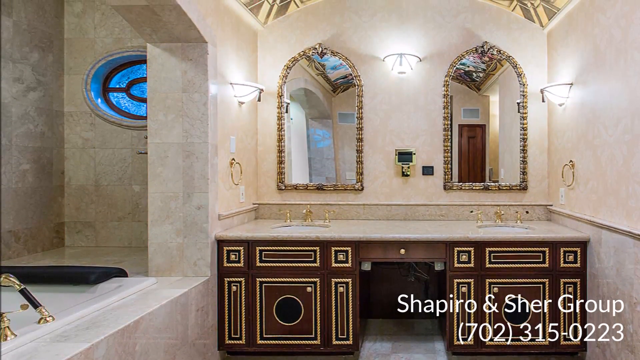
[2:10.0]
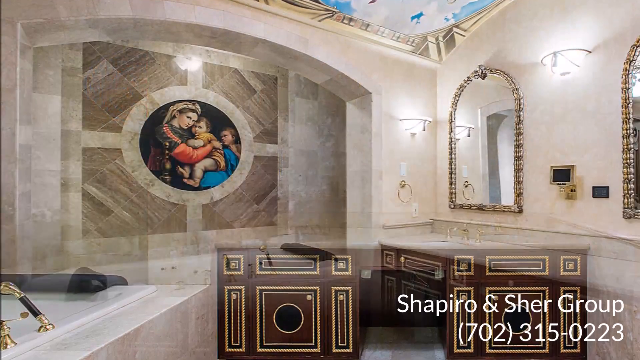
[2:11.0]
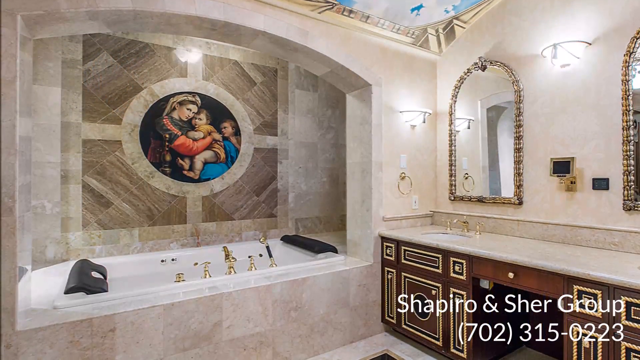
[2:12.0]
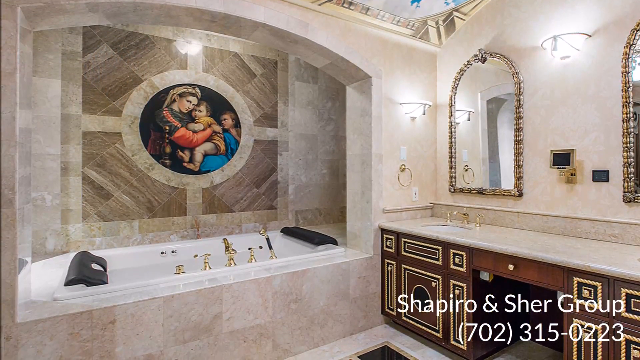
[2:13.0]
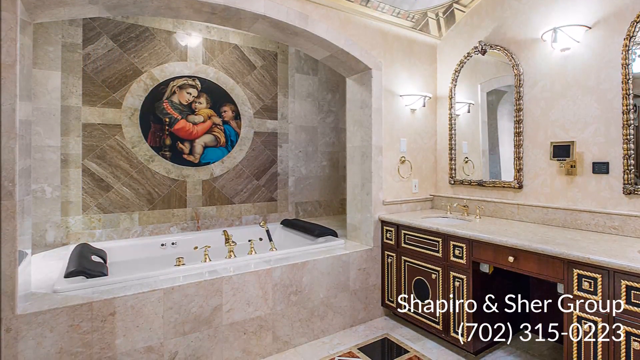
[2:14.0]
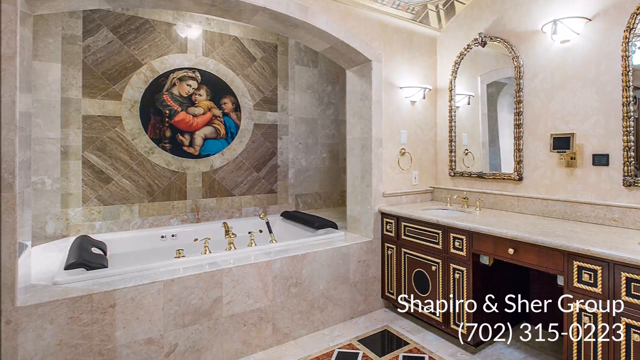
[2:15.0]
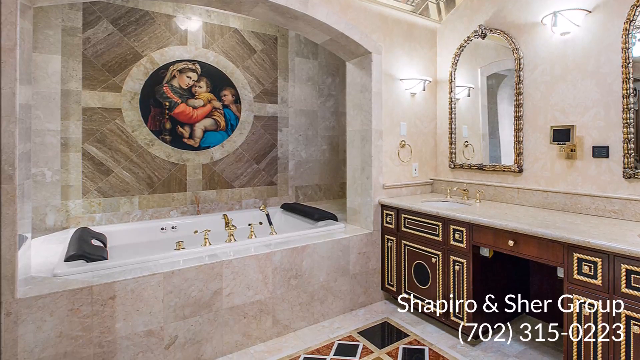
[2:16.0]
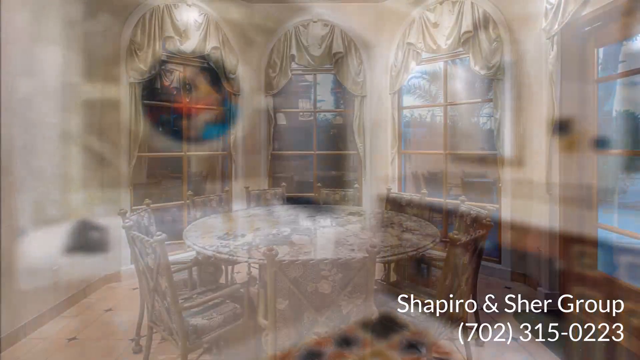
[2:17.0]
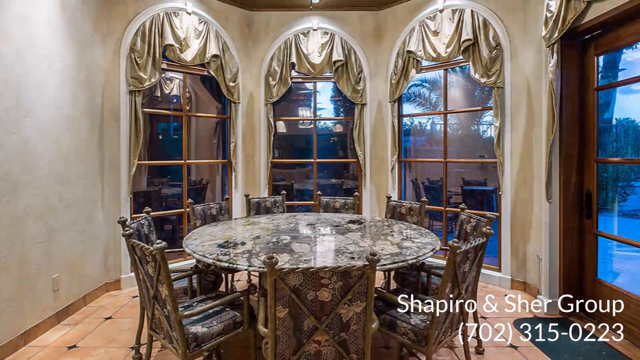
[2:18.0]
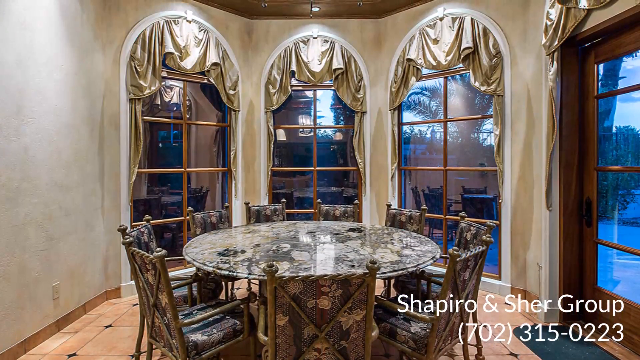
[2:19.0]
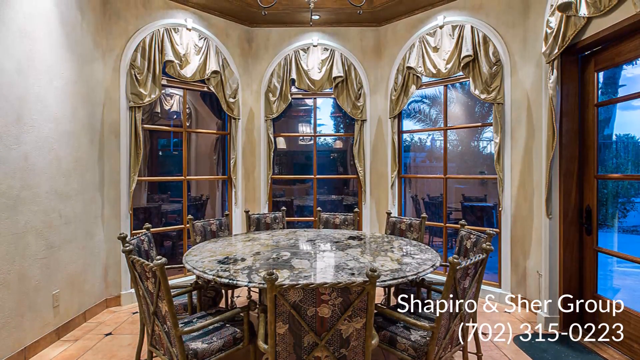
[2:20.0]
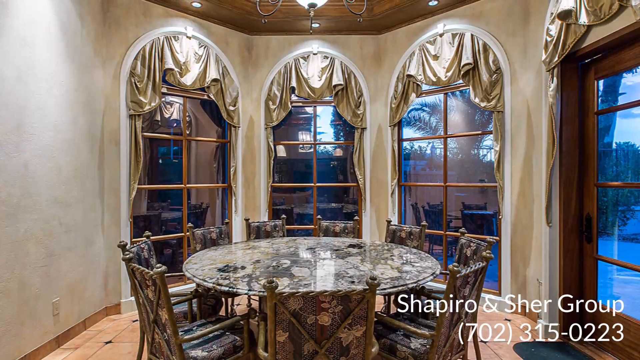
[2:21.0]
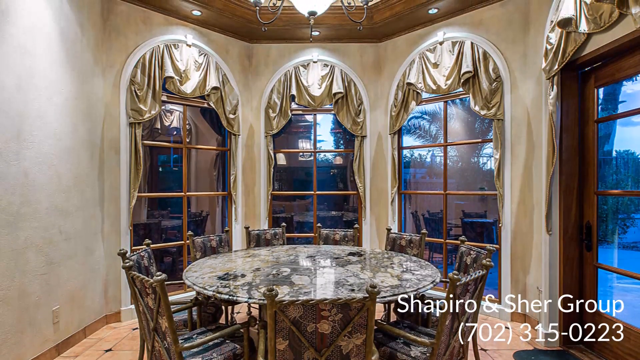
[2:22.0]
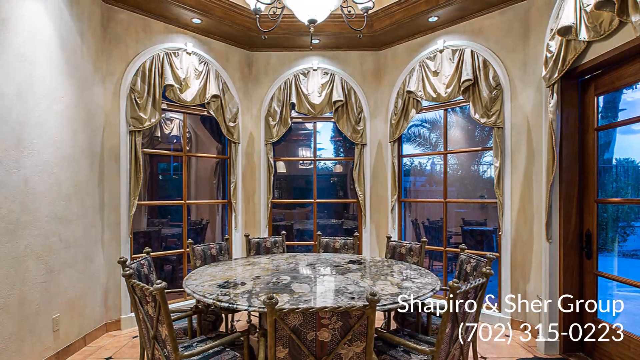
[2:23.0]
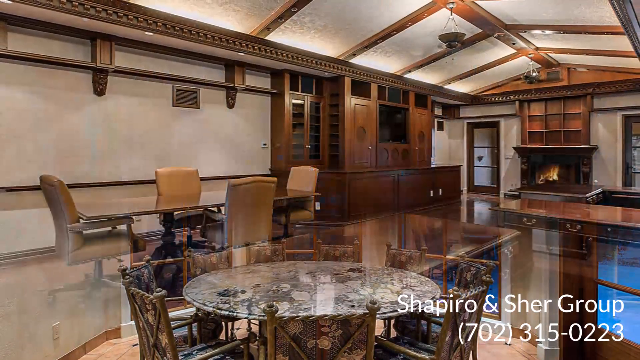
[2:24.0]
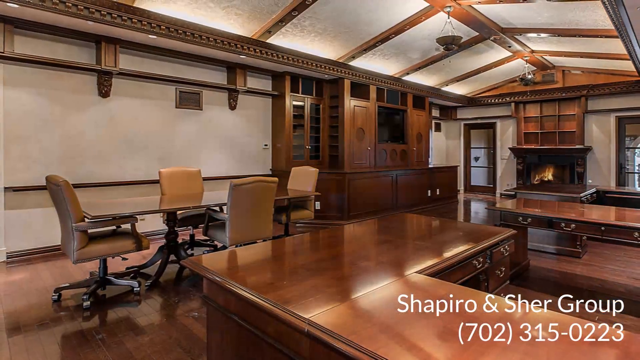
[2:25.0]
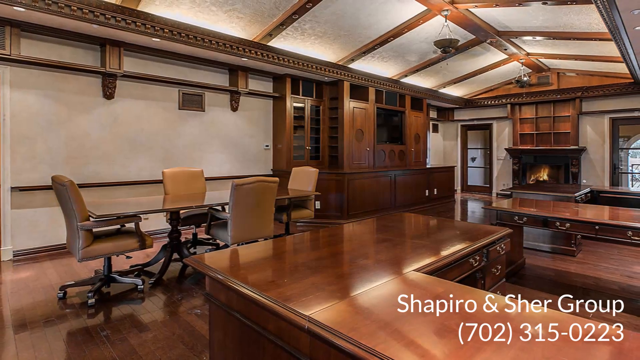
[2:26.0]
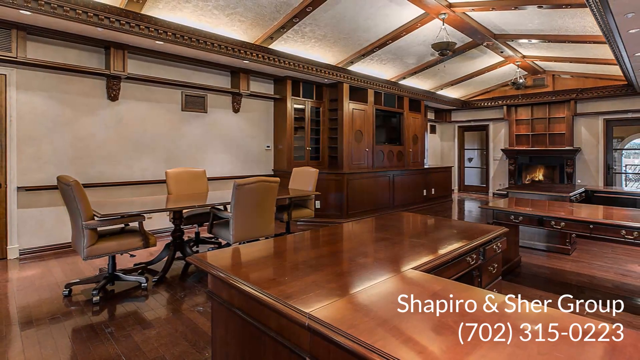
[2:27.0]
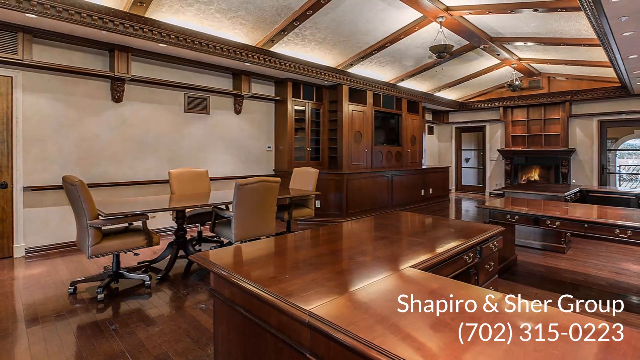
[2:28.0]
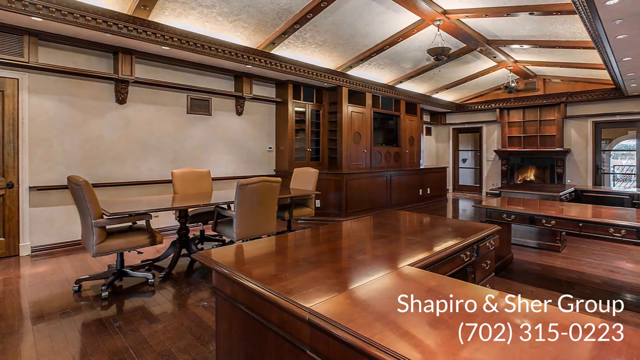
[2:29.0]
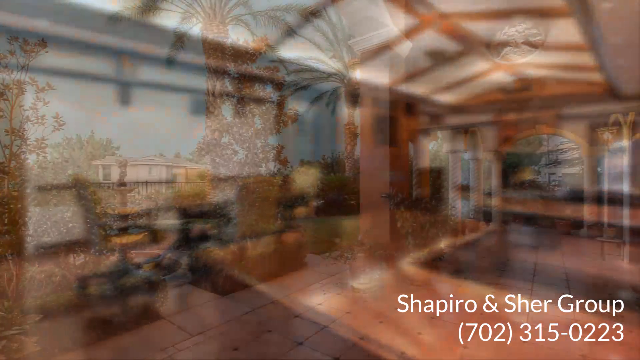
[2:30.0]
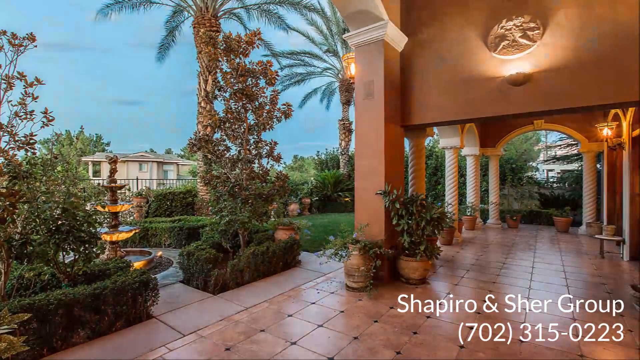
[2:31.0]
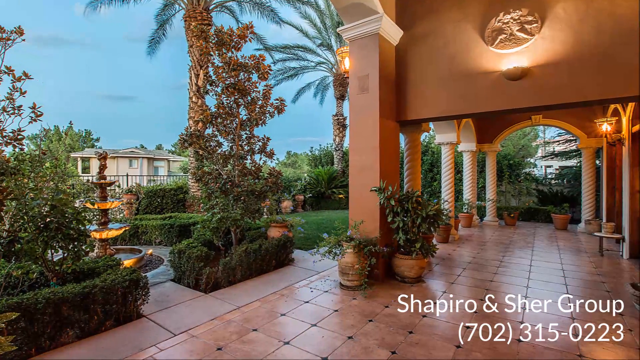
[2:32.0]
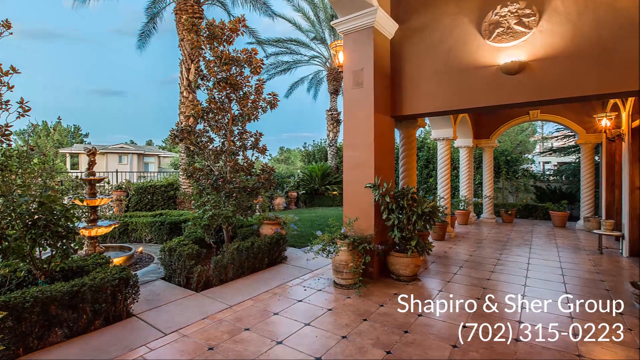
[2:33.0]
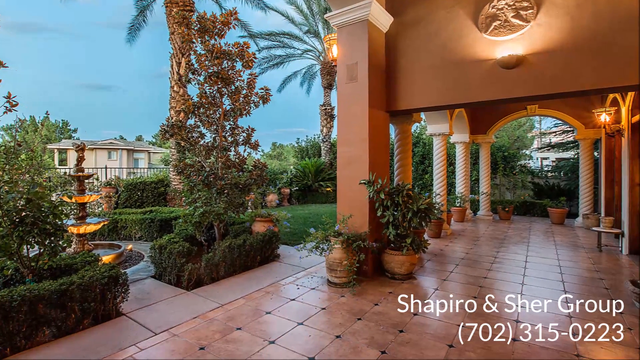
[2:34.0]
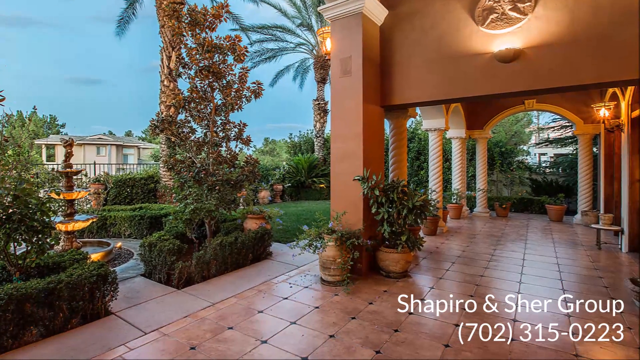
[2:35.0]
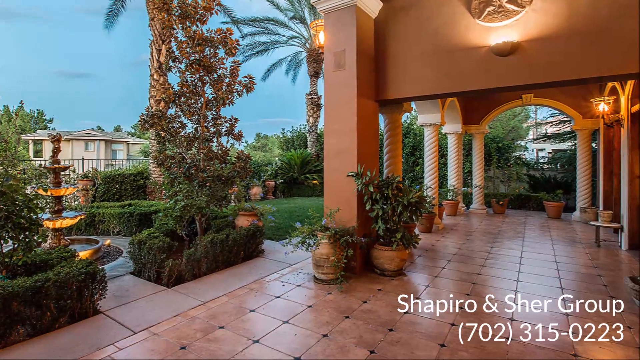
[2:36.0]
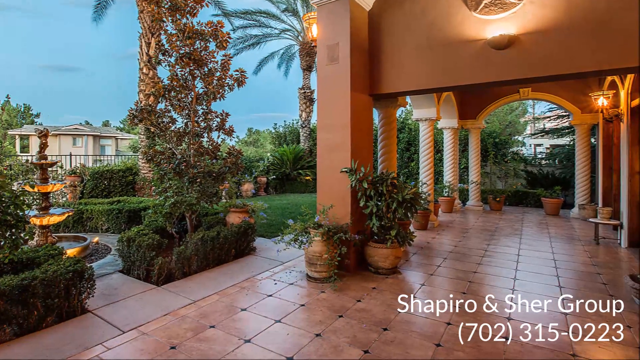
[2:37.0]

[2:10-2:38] A different view of a restroom shows a double sink with mirrors above it on the right side and a bathtub on the left. Above the bathtub hangs a circular picture, like a painting, of a woman holding her child, with another child also visible, three people in all; it hangs on the wall of the bathroom and faces directly toward the camera. The scene changes to a round marble table with nine chairs around it. Three windows are in the background at the front, and a wooden glass door is to the right side. The floor is tiled, and a hanging light is up above. The scene then changes to a very large room with a fireplace off in the background to the right.